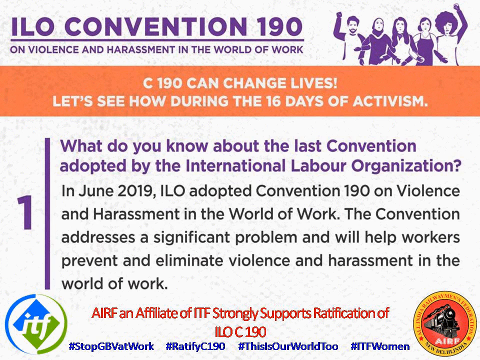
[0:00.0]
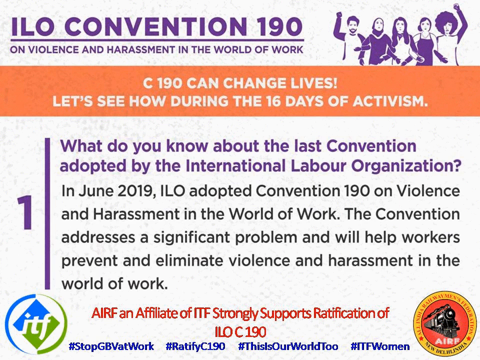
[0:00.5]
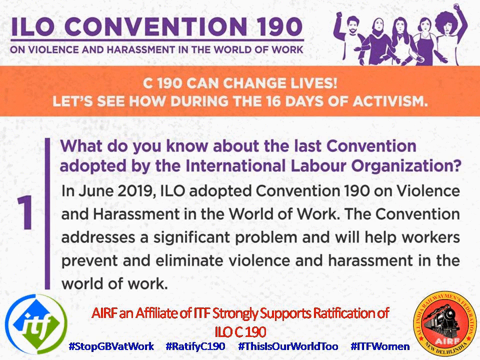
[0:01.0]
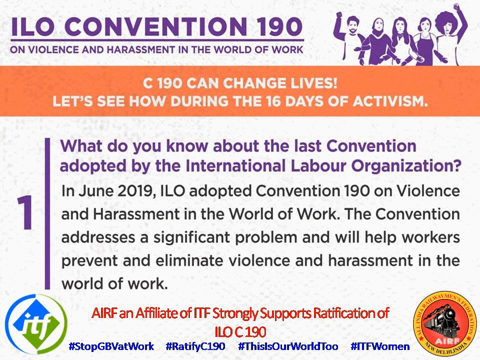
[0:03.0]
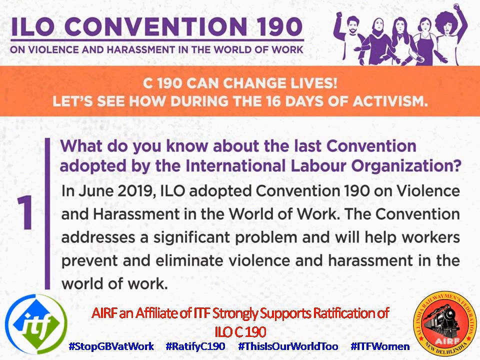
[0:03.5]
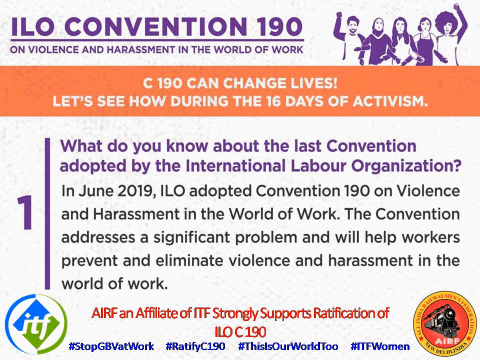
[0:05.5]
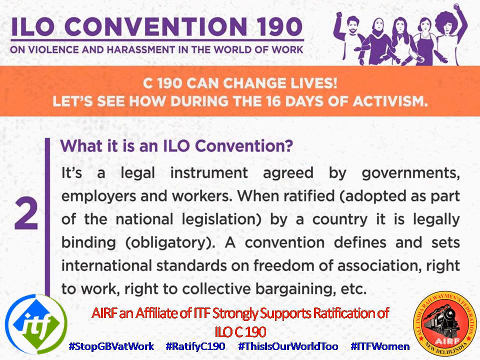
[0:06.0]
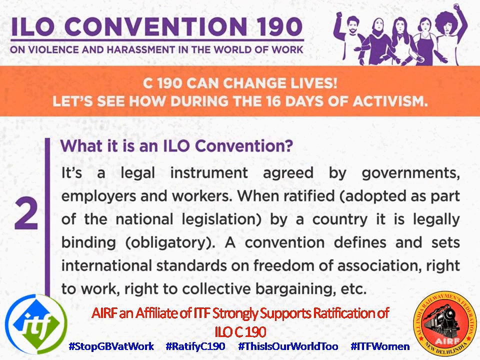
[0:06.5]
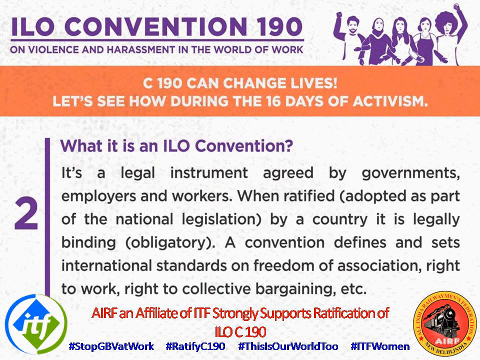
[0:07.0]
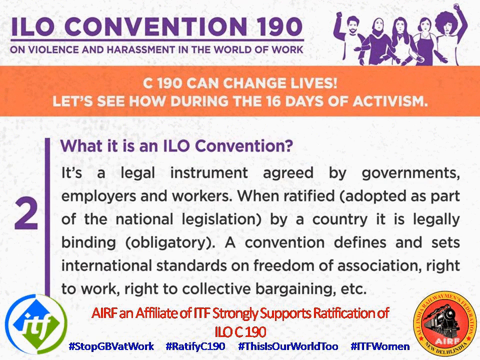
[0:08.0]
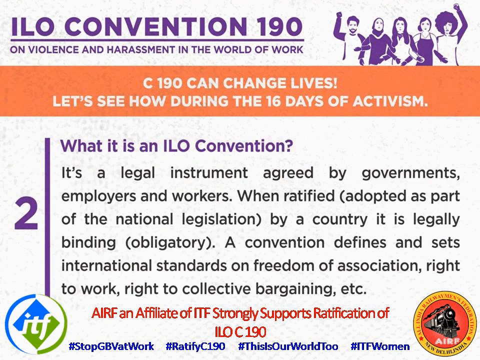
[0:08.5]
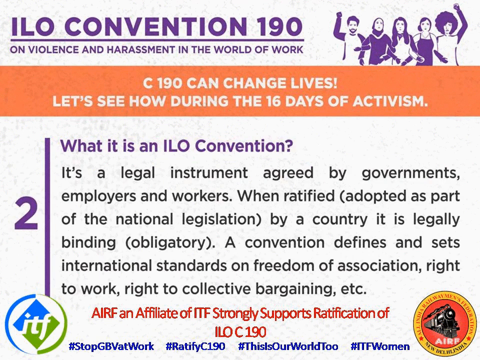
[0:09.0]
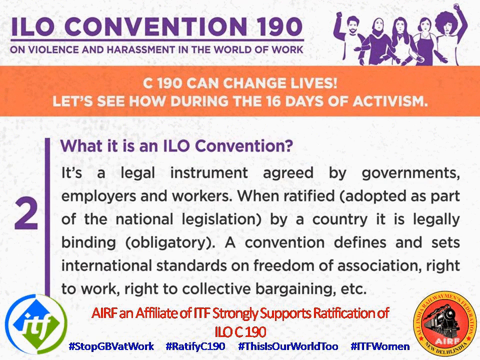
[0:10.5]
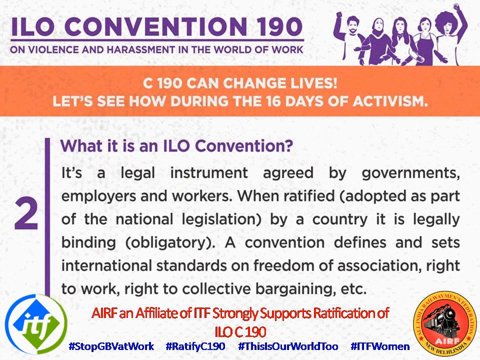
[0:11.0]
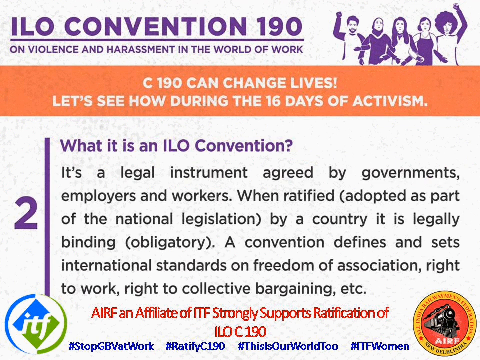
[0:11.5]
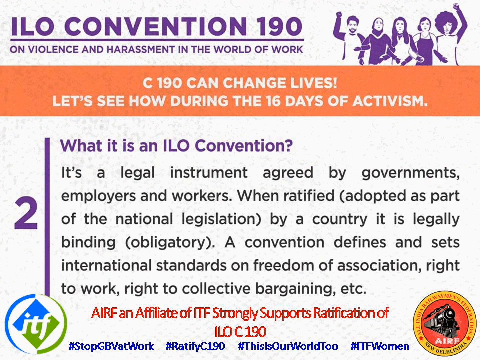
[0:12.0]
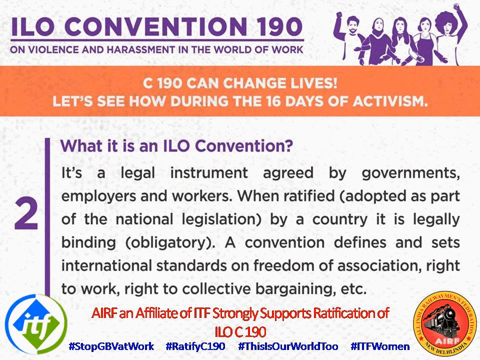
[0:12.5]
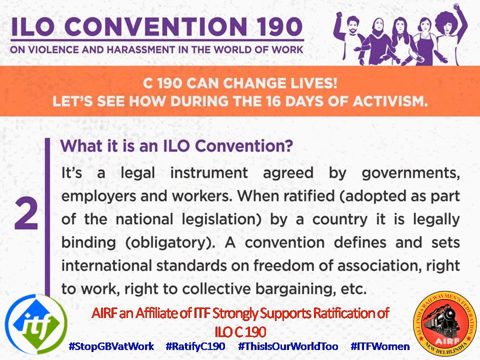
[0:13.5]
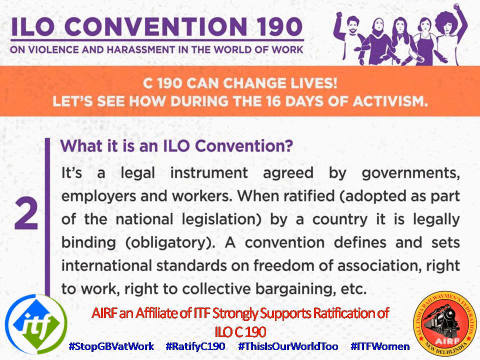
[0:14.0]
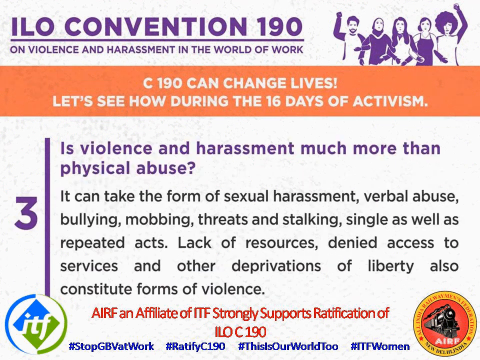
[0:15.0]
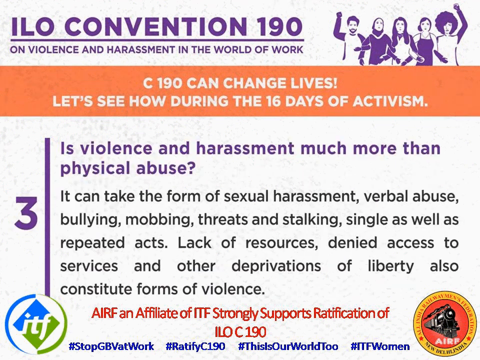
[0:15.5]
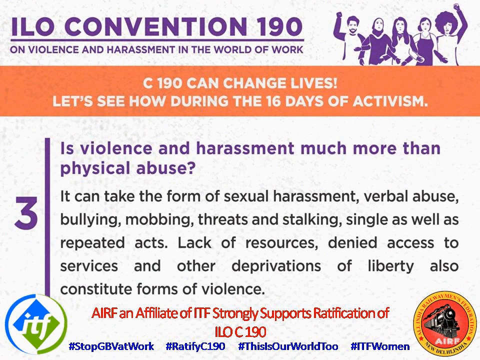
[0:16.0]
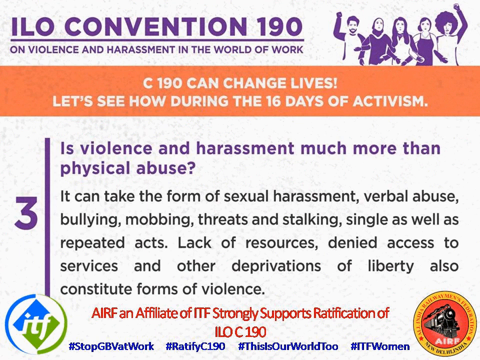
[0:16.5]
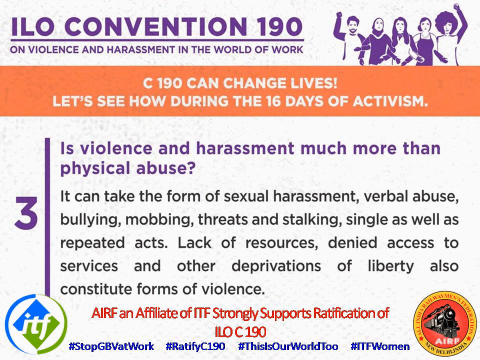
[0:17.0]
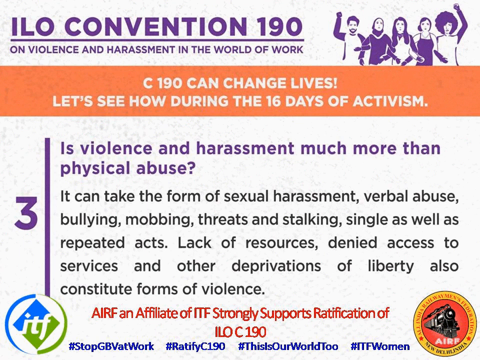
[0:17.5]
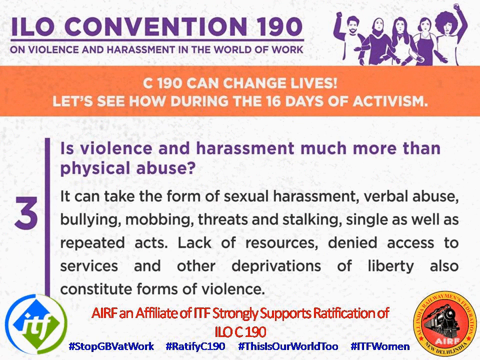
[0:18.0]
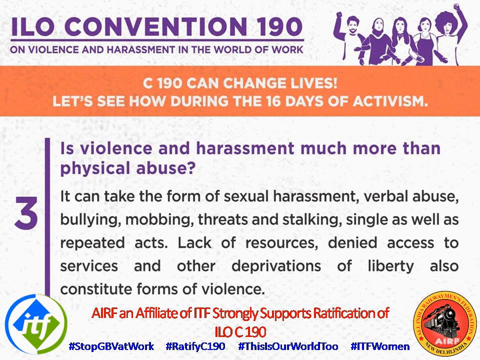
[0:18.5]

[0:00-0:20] The video is primarily text about ILO Convention 190 on Violence and Harassment in the World of Work. At the top is "ILO Convention 190", and beneath it "on violence and harassment in the world of work", all in purple lettering. To the right is a drawing of five individuals from the waist up: one man on the left, followed by four different women going to the right, with their arms interlinked at the elbows. Beneath that is a peach rectangle with white text that says "C-190 can change lives. Let's see how during the 16 days of activism." Below it, purple lettering reads "What do you know about the last convention adopted by the International Labor Organization?" Black text beneath that reads "In June 2019, ILO adopted Convention 190 on Violence and Harassment in the World of Work. The convention addresses a significant problem and will help workers prevent and eliminate violence and harassment in the world of work." Beneath that, red text says "AIRF, an affiliate of ITF, strongly supports ratification of ILO C-190."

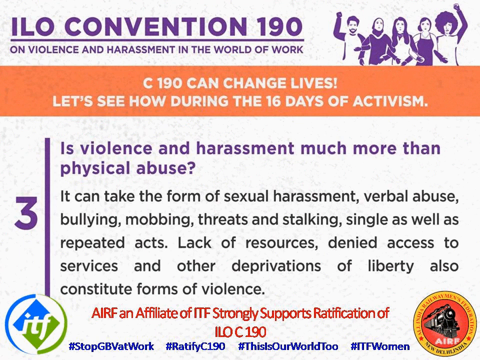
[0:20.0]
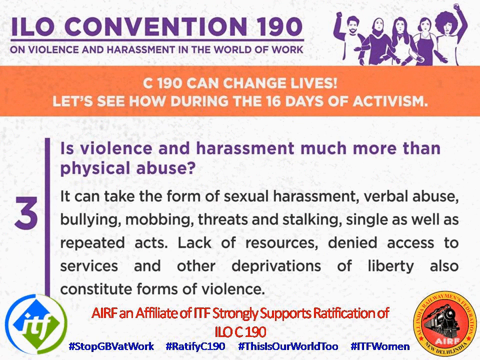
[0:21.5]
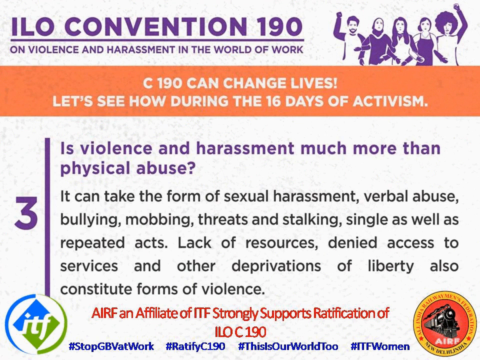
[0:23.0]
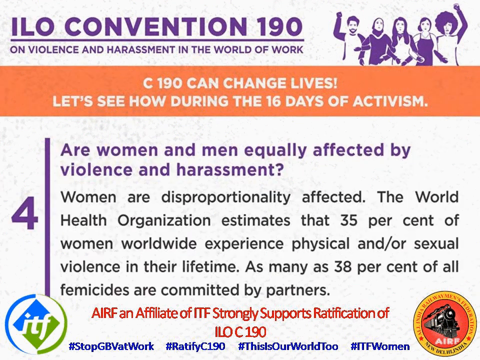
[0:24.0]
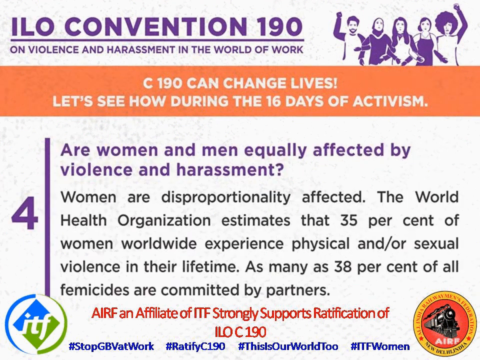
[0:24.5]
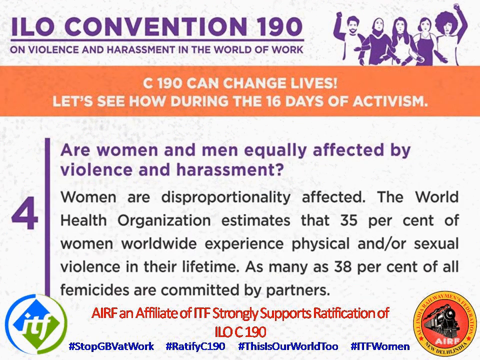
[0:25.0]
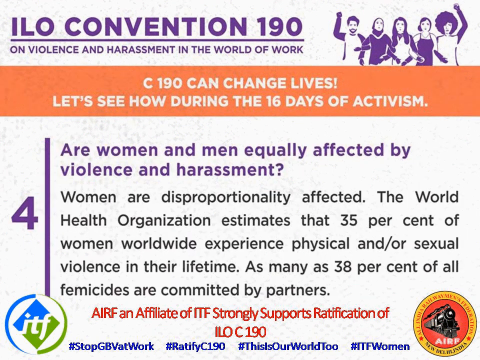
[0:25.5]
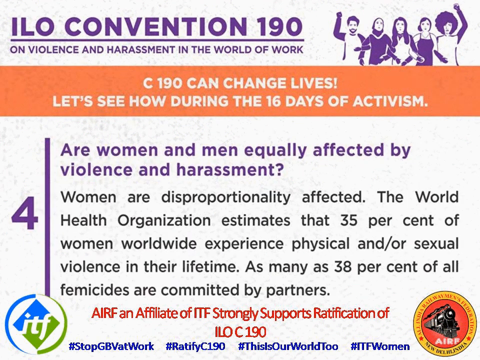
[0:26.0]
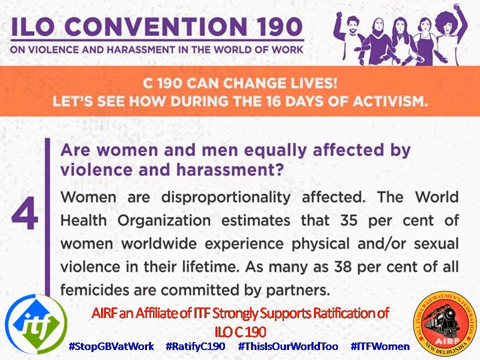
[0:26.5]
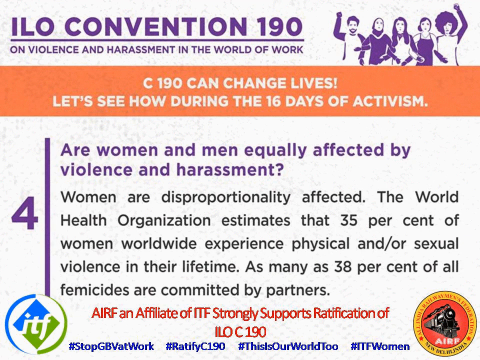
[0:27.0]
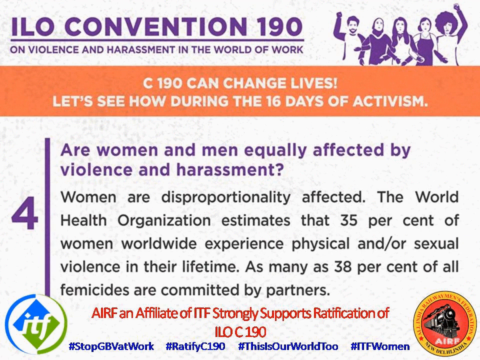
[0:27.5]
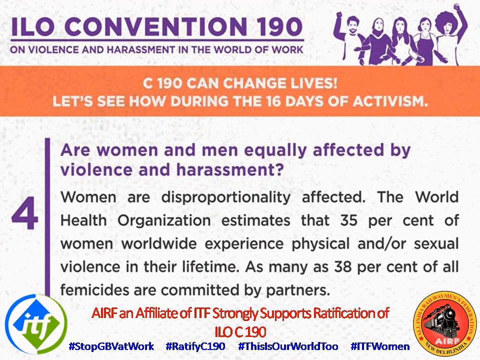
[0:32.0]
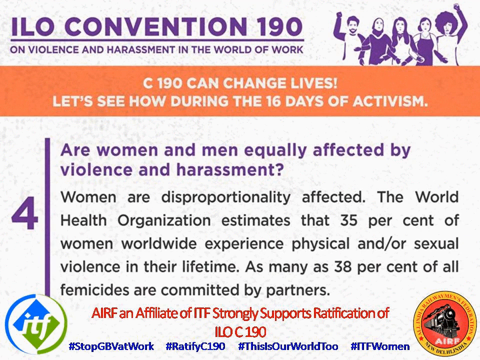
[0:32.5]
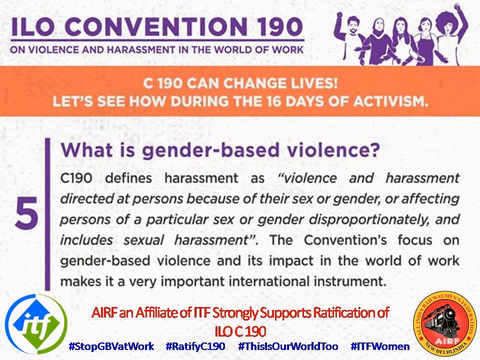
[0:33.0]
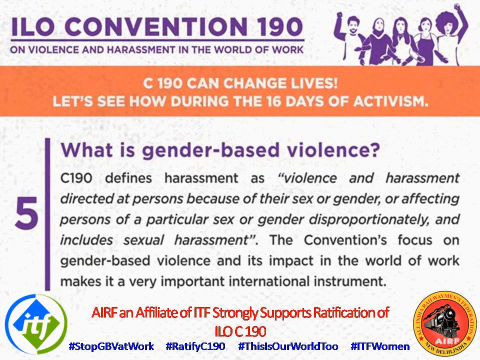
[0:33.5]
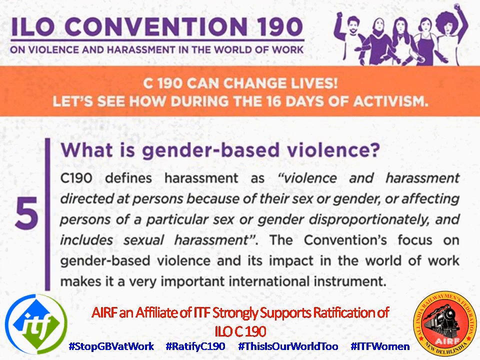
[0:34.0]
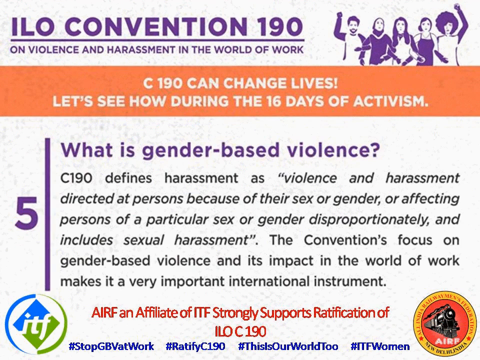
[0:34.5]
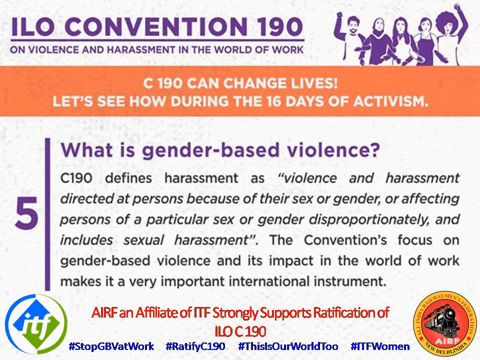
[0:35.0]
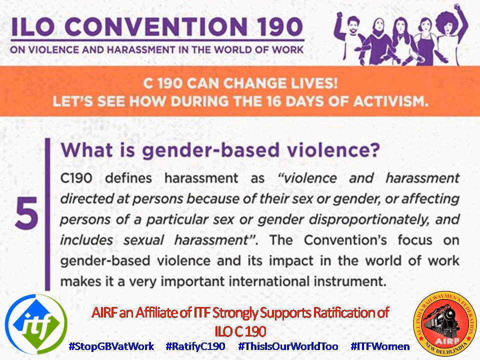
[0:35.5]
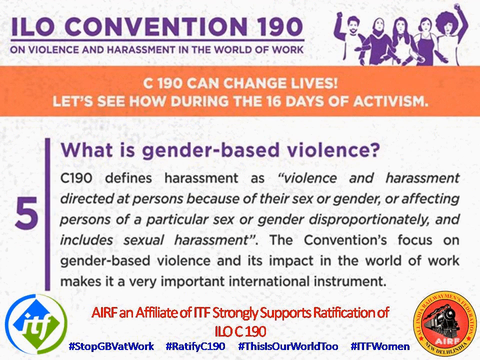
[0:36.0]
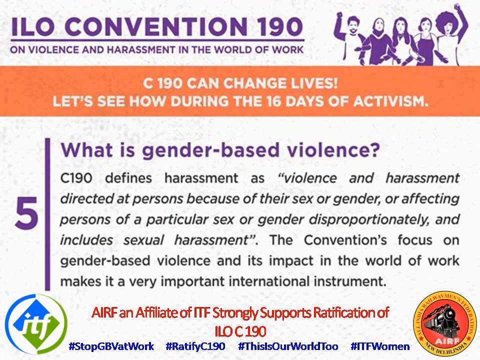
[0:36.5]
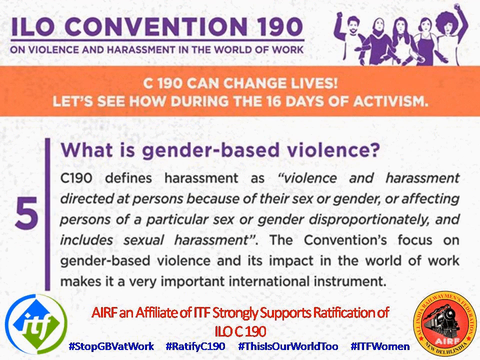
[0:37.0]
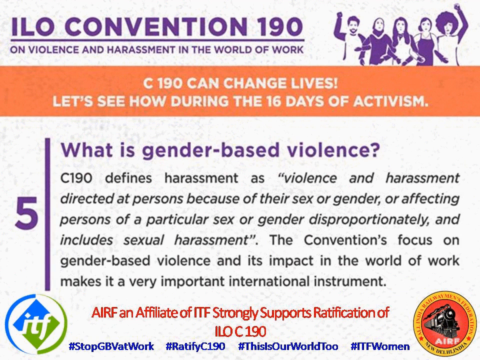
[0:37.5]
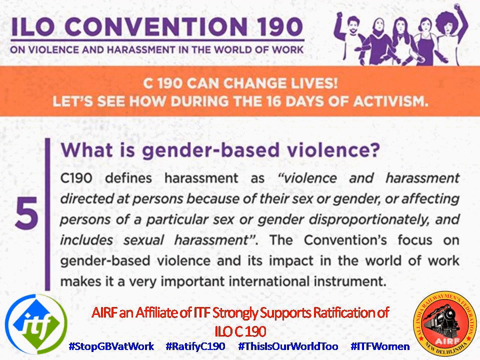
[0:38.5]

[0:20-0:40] The second section has a purple 2 on the left, followed on the right by purple lettering asking what an ILO convention is. Black text beneath it reads "It's a legal instrument agreed by governments, employers, and workers. When ratified, adopted as part of the national legislation by a country, it is legally binding, obligatory. A convention defines and sets international standards on freedom of association, right to work, right to collective bargaining, etc." Below is red text: "AIRF, an affiliate of ITF, strongly supports ratification of ILOC 190." Scrolling down to the third section, a purple 3 is on the left, with purple text on the right asking "Is violence and harassment much more than physical abuse?" Black text beneath states "It can take the form of sexual harassment, verbal abuse, bullying, mobbing, threats and stalking, single, as well as repeated acts. Lack of resources, denied access to services, and other deprivations of liberty also constitute forms of violence." The red AIRF text follows. Section four has a purple 4 on the left and a purple header on the right: "Are women and men equally affected by violence and harassment?" Black text beneath reads "Women are disproportionately affected. The World Health Organization estimates that 35 percent of women worldwide experience physical and or sexual violence in their lifetime. As many as 38 percent of all femicides are committed by partners."